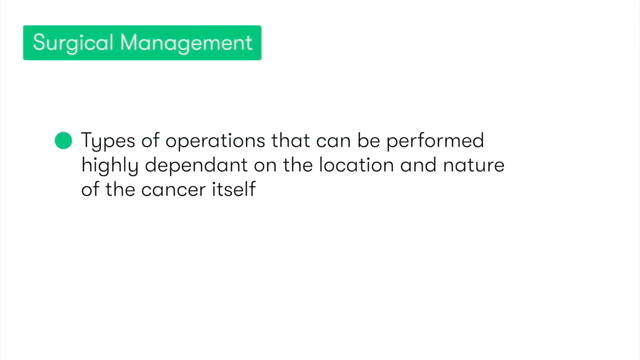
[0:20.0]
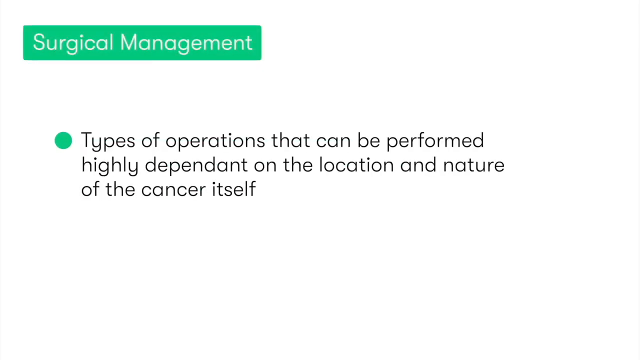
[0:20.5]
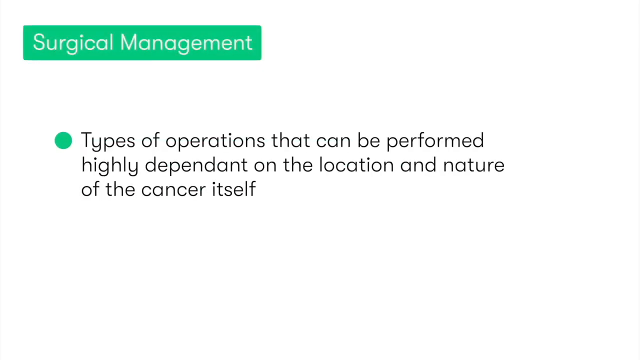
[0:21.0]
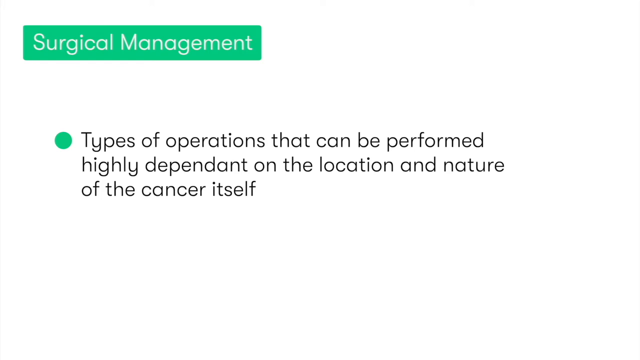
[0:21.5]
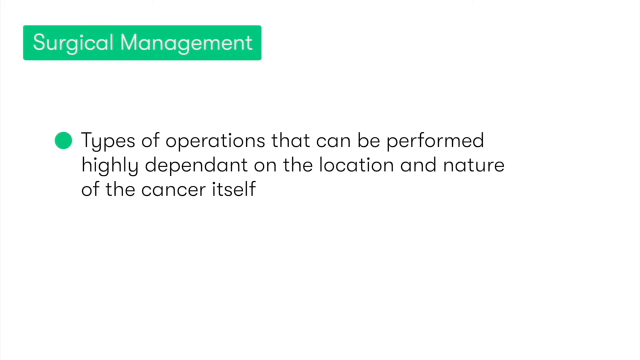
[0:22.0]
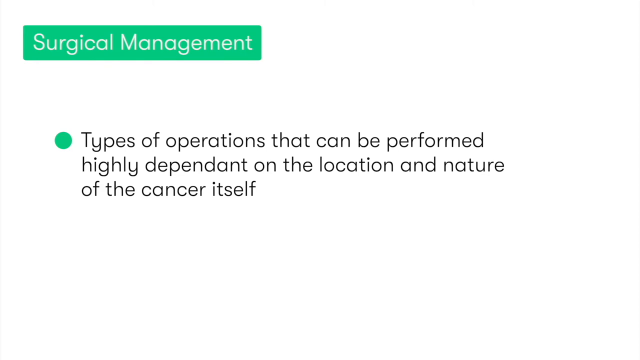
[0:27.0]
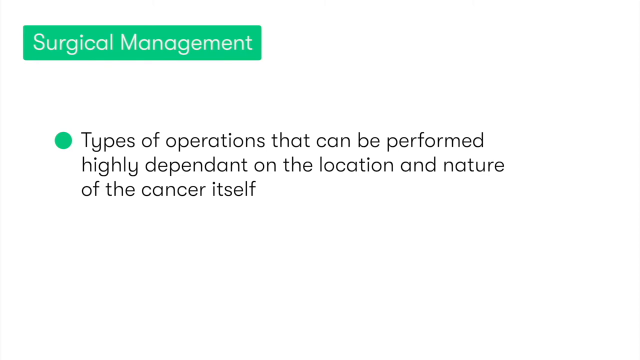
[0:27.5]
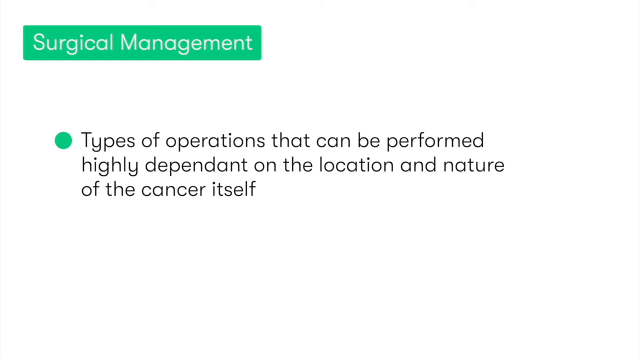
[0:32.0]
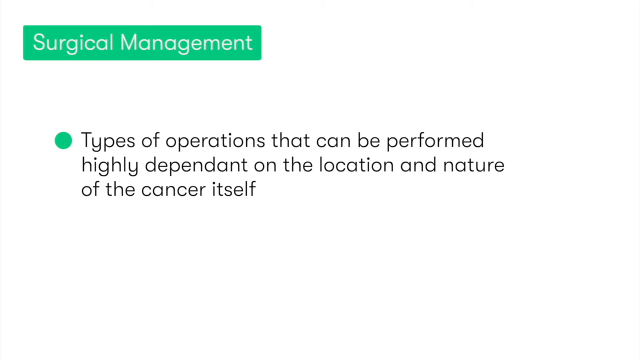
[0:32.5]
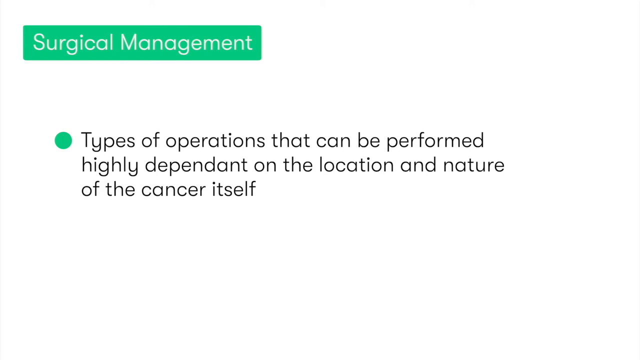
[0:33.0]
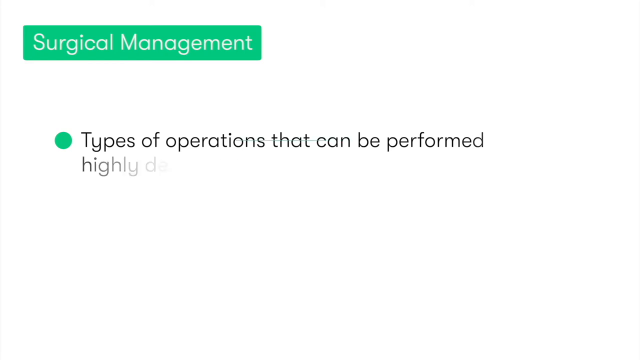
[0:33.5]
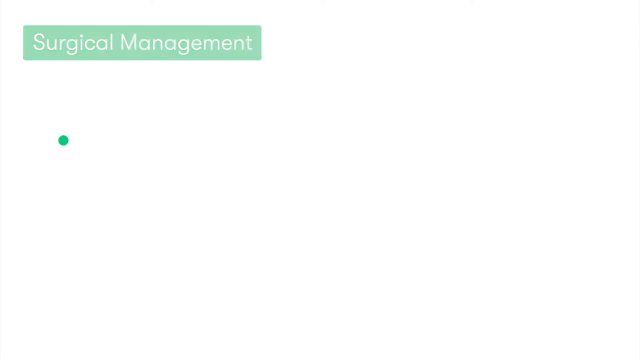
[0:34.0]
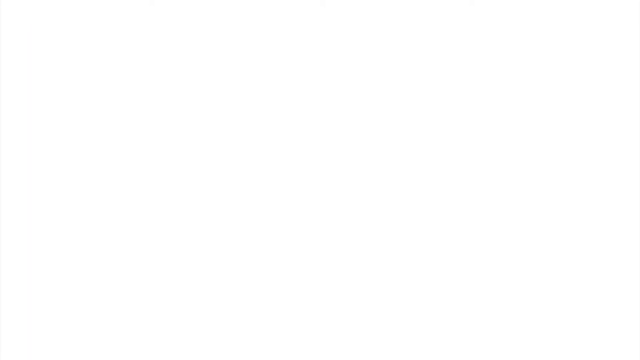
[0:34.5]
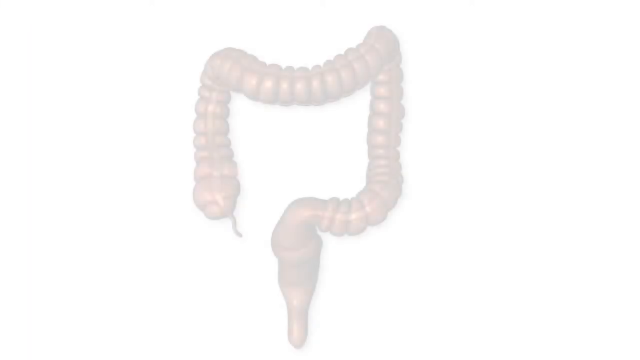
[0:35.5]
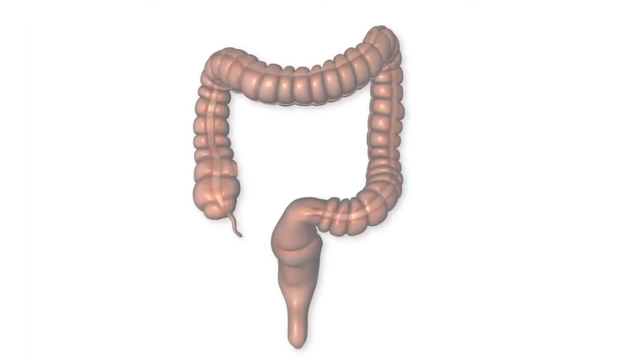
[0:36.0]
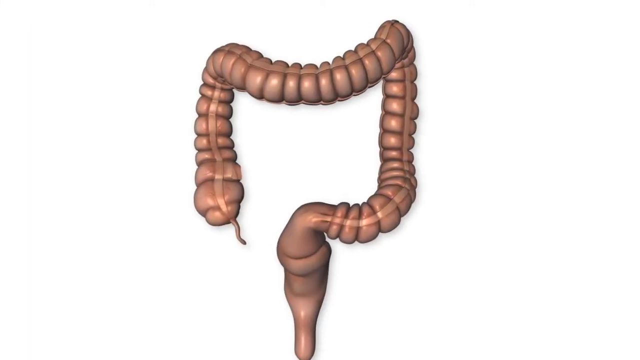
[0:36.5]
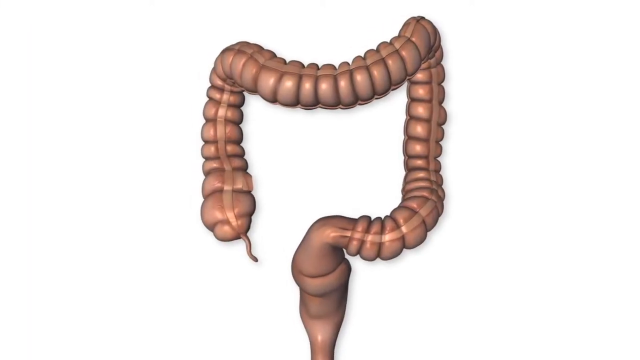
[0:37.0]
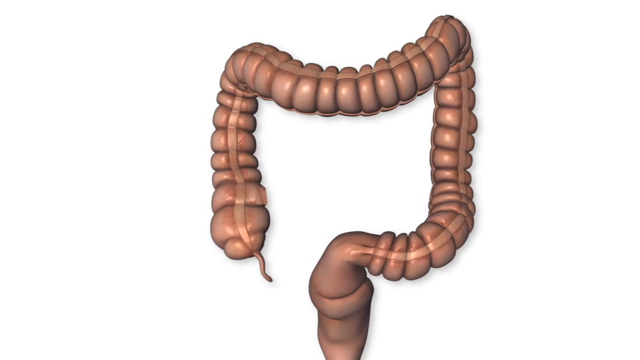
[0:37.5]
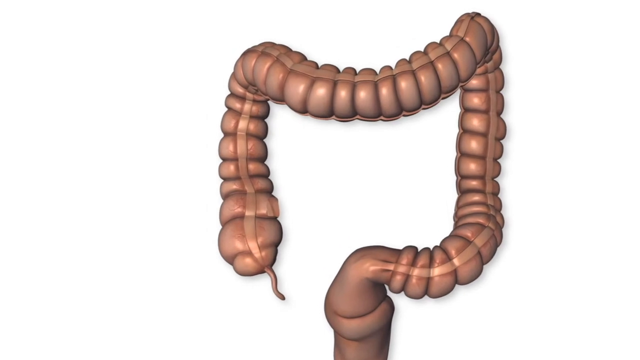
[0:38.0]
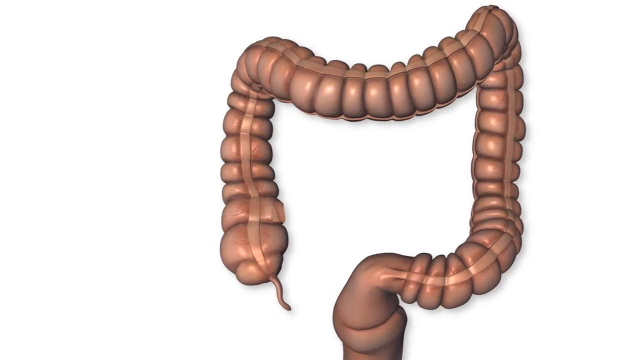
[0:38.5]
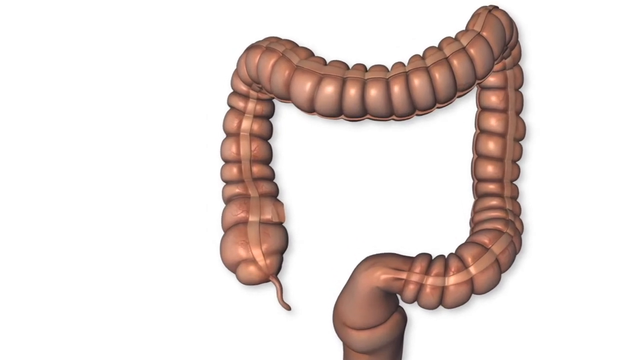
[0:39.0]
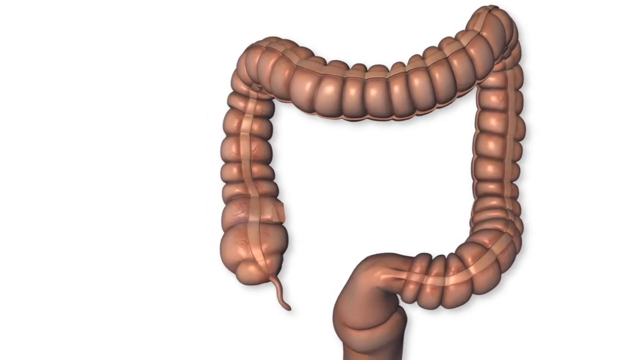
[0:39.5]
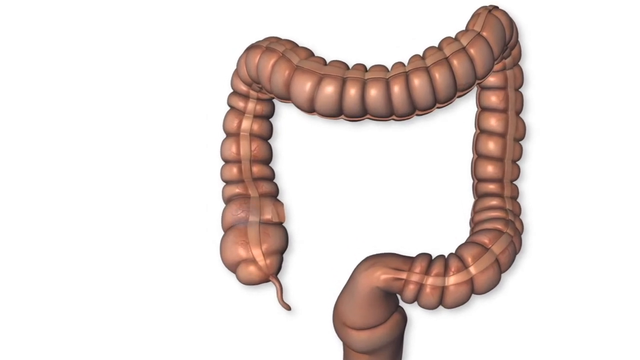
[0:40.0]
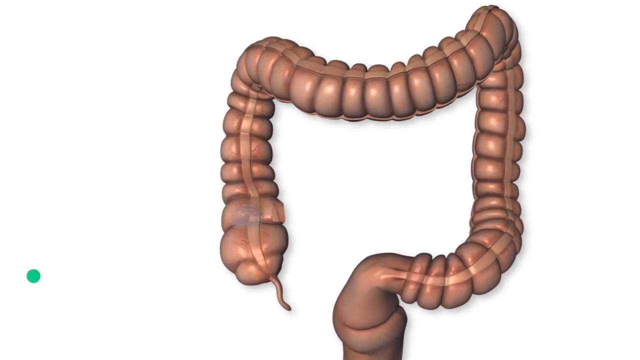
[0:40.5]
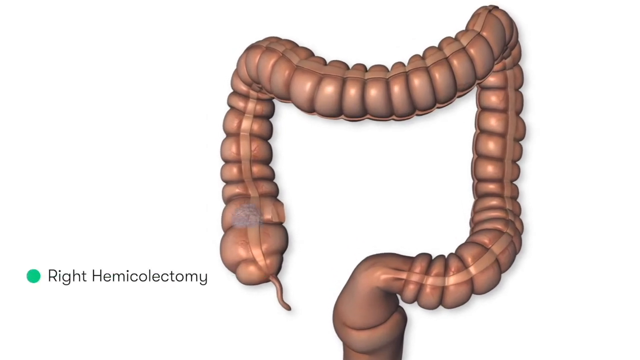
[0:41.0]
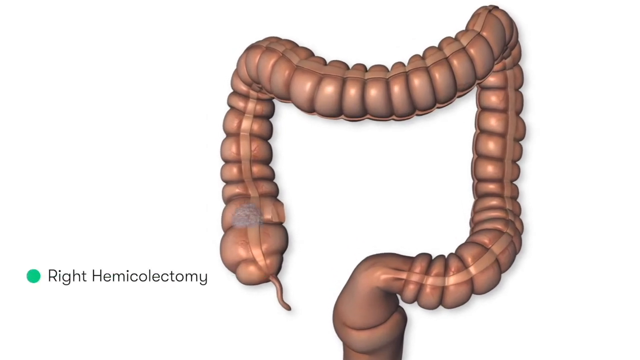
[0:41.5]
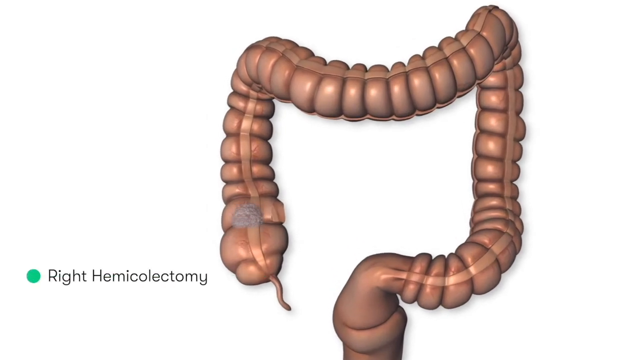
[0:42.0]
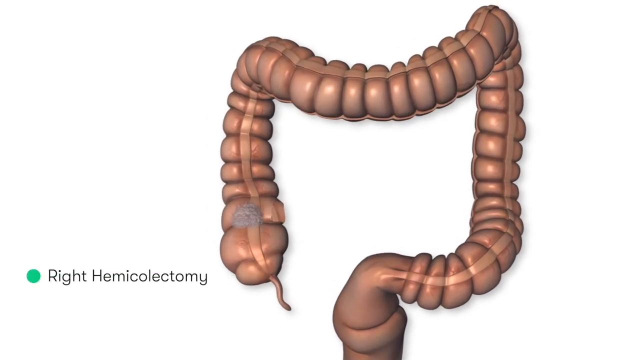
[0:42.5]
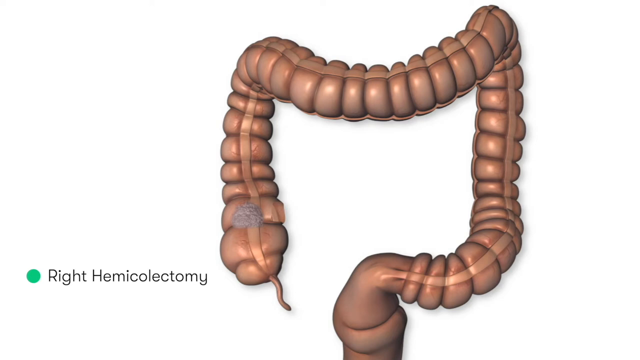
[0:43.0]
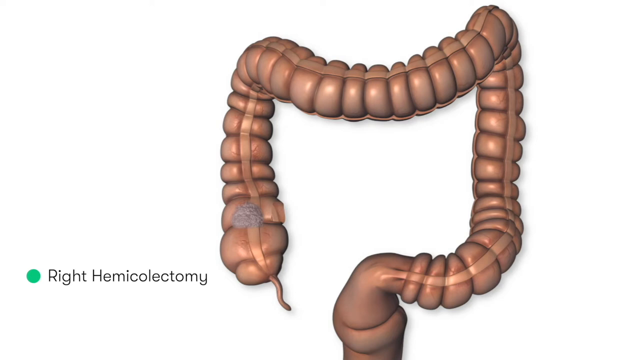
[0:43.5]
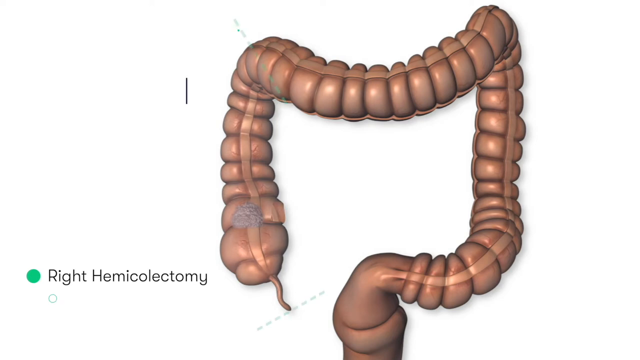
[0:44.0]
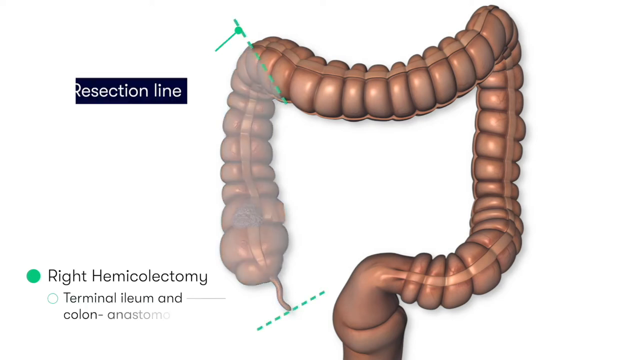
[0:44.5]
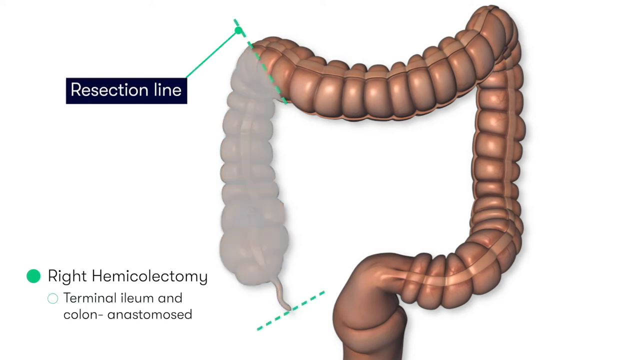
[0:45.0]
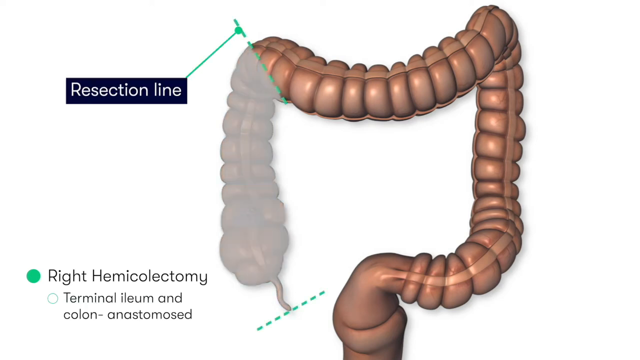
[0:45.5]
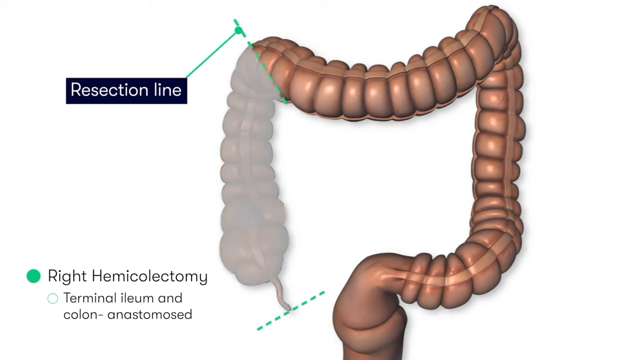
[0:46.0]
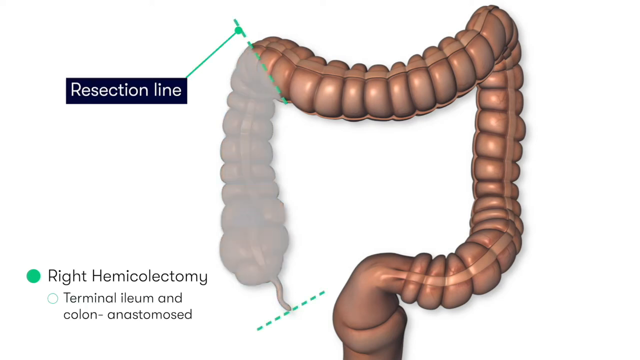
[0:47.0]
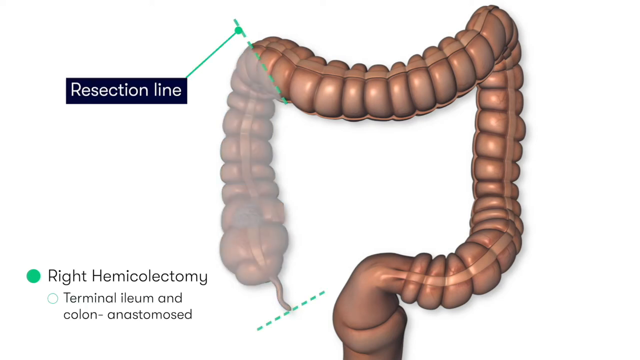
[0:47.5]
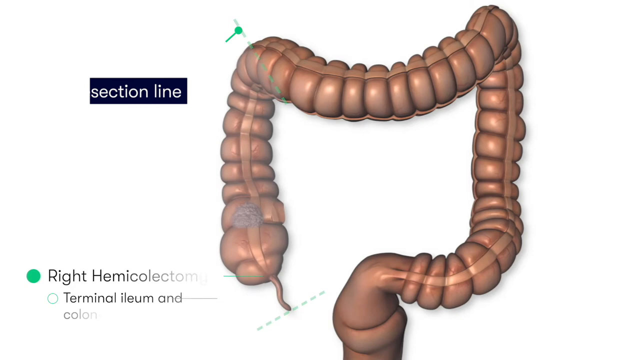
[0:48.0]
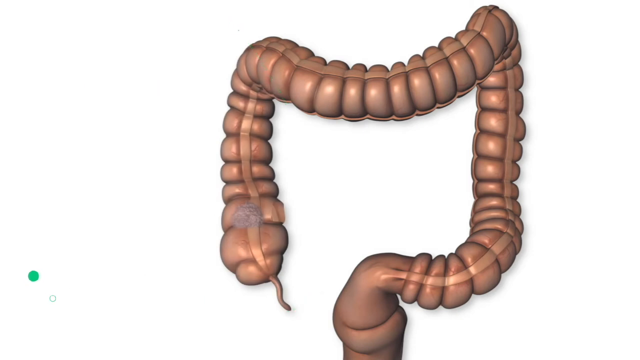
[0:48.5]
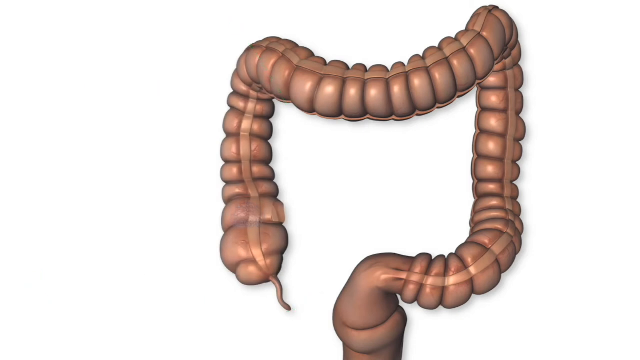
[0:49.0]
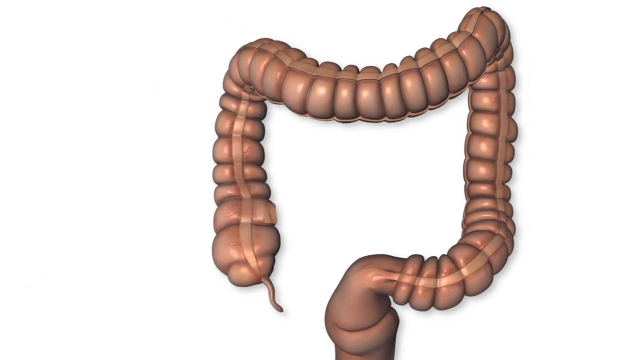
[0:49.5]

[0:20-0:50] On a white screen, a green box at the top contains white lettering reading "surgical management." A bullet point in the middle of the screen reads "types of operation that can be performed highly dependent on the location and nature of the cancer itself." After quite a long pause, what appear to be intestines appear, and the view sort of zooms in on them. On the left side of the screen, bullet points read "right hemicolectomy" and "terminal ileum and colon." The graphic of this interior body part looks 3D and a little realistic, and certain sections inside it are labeled.